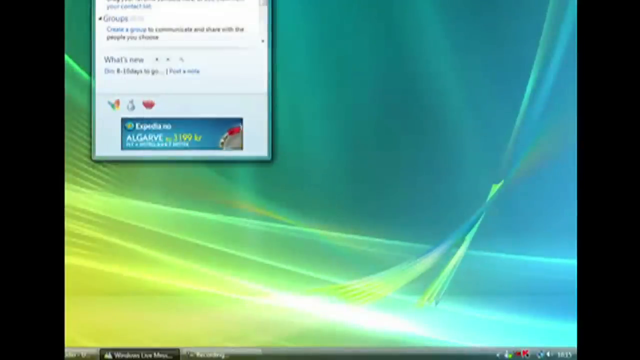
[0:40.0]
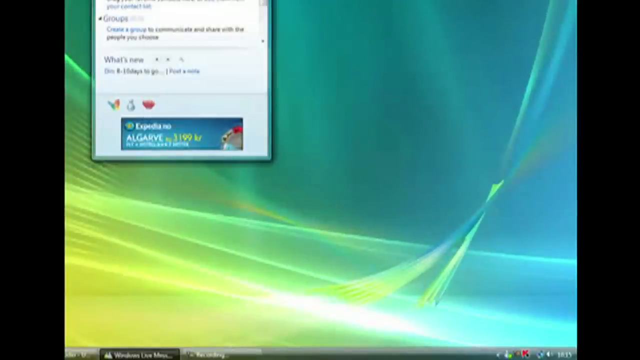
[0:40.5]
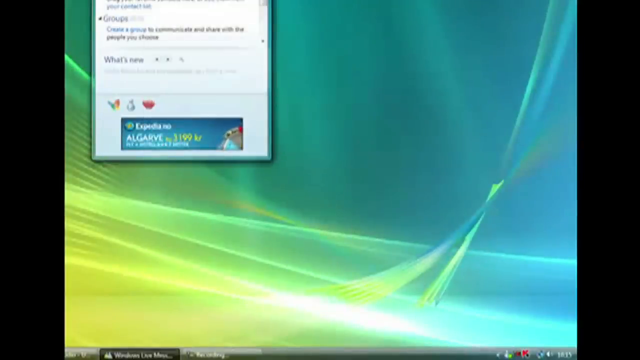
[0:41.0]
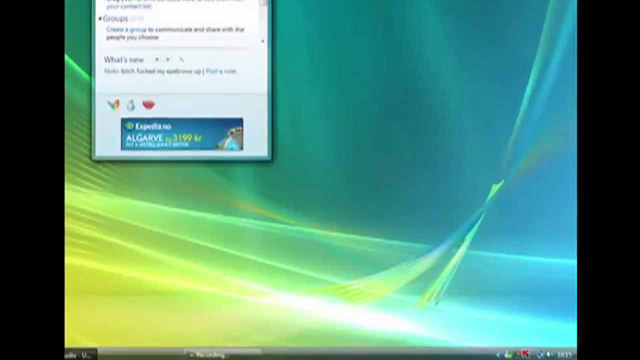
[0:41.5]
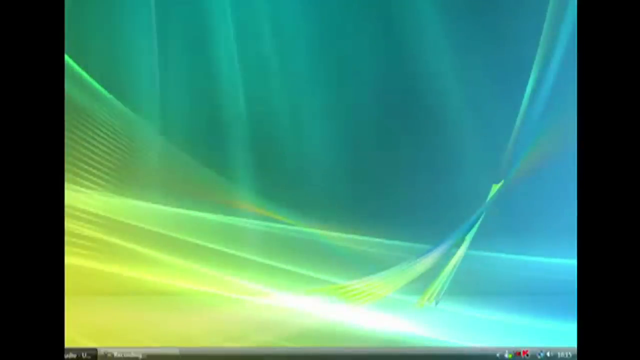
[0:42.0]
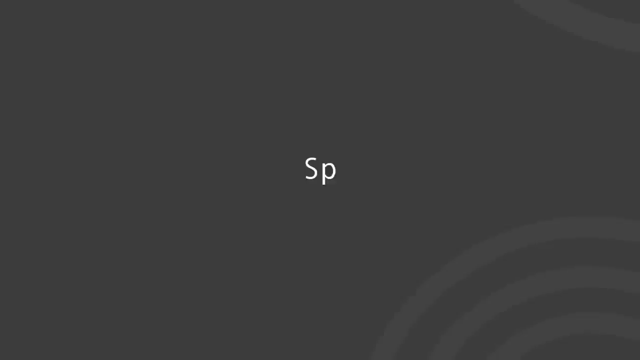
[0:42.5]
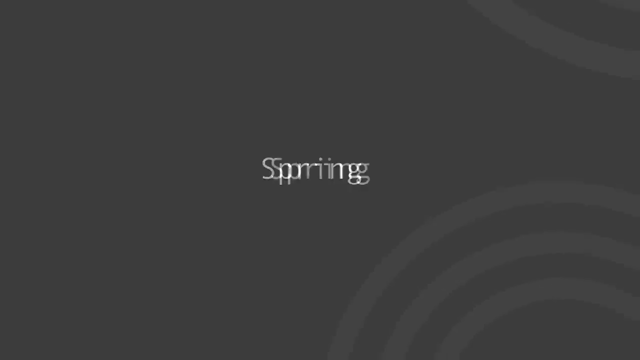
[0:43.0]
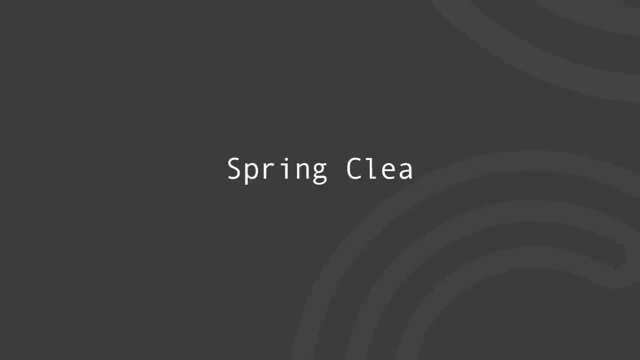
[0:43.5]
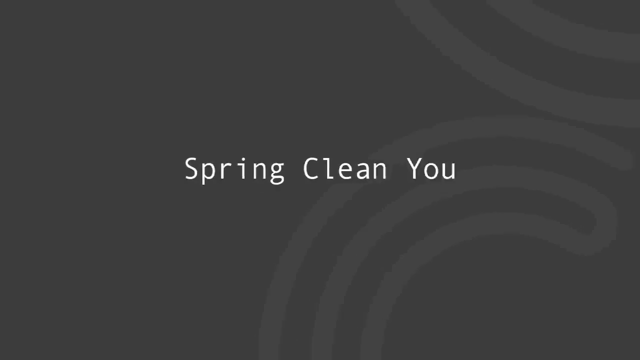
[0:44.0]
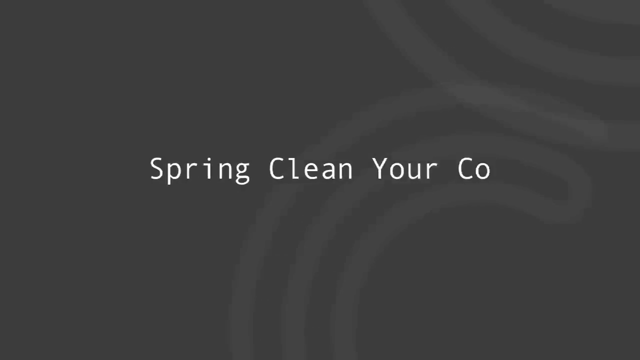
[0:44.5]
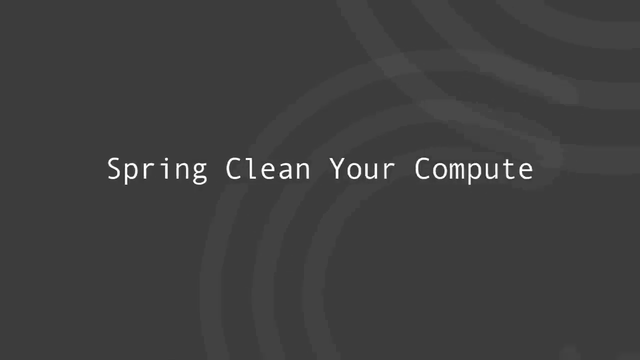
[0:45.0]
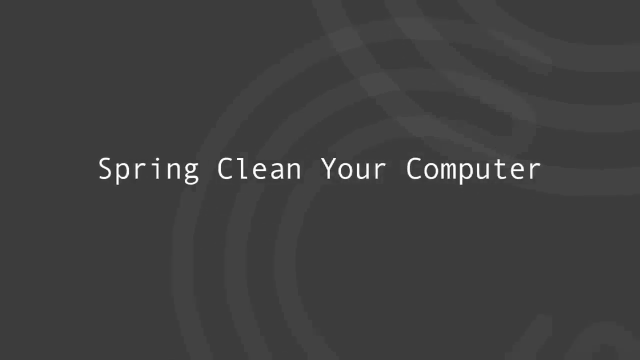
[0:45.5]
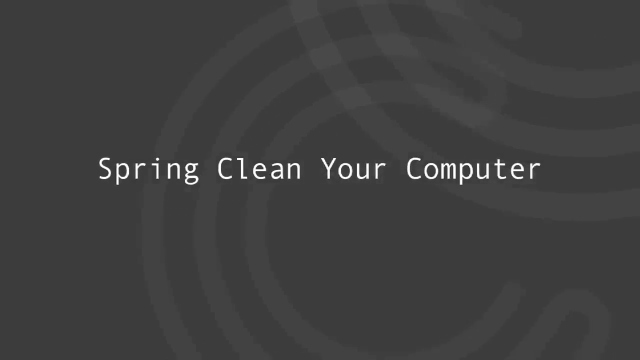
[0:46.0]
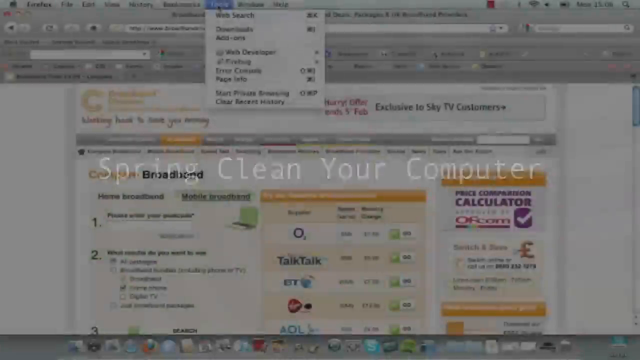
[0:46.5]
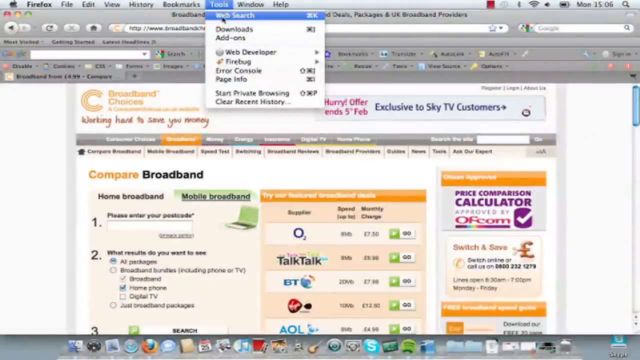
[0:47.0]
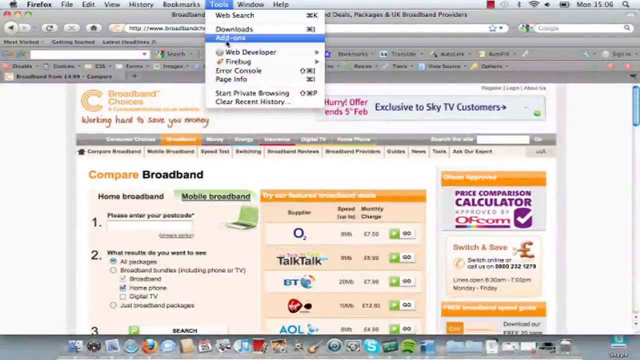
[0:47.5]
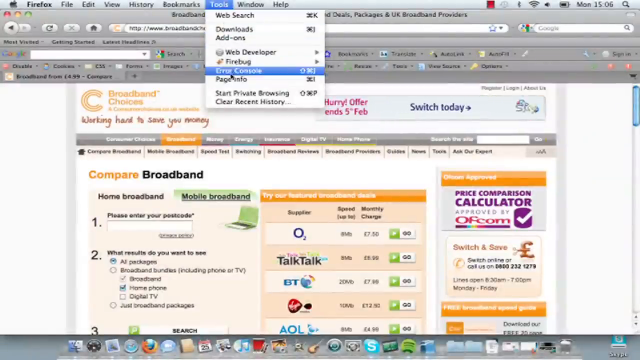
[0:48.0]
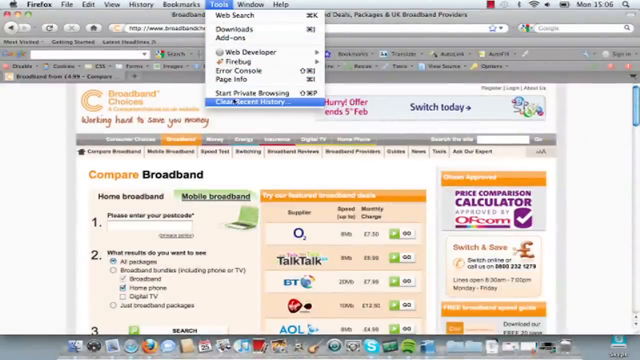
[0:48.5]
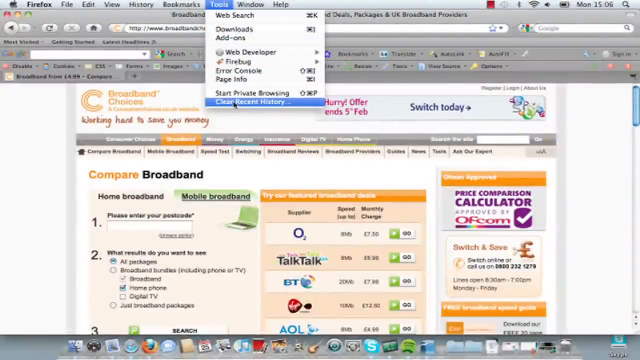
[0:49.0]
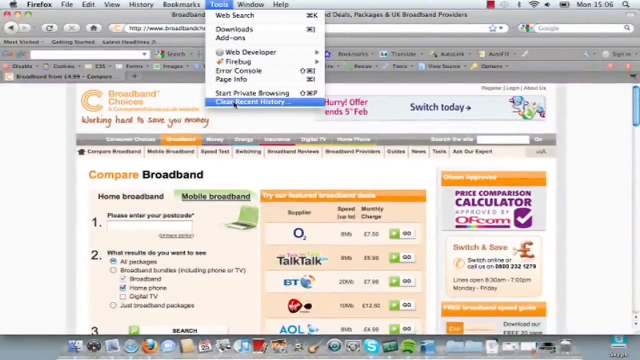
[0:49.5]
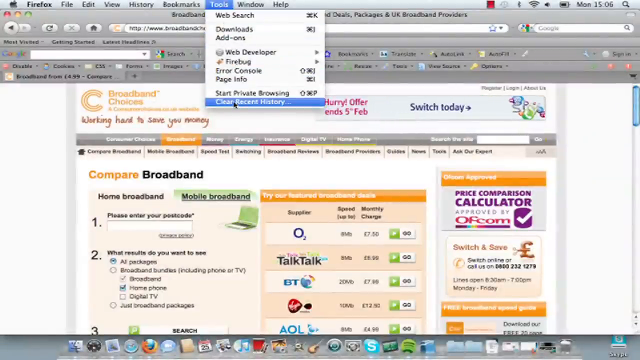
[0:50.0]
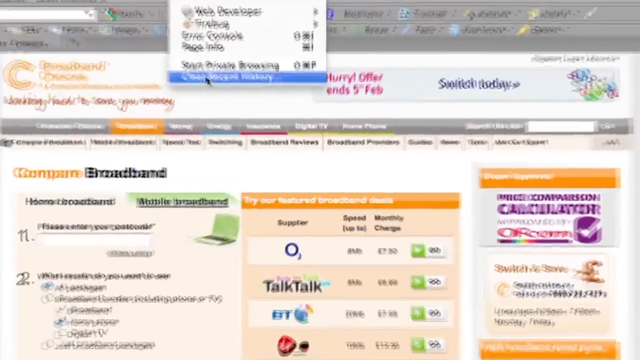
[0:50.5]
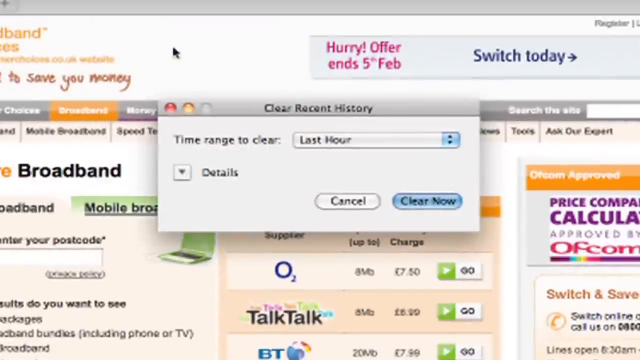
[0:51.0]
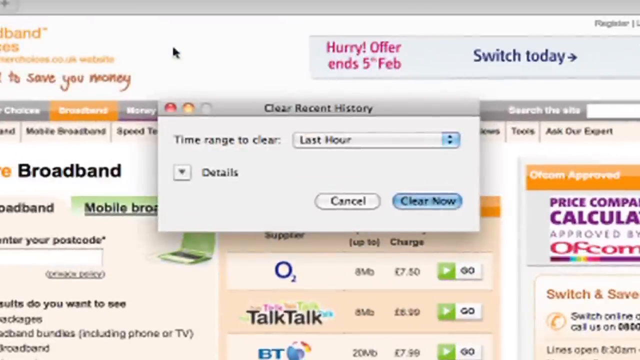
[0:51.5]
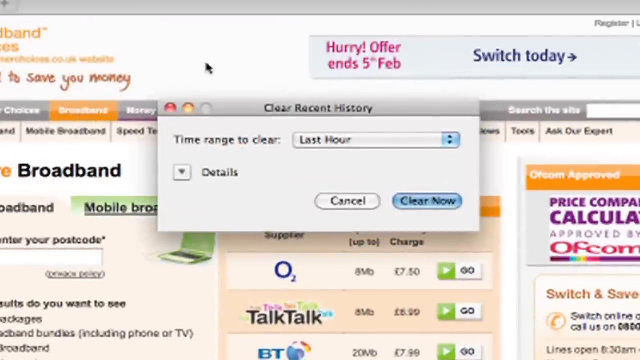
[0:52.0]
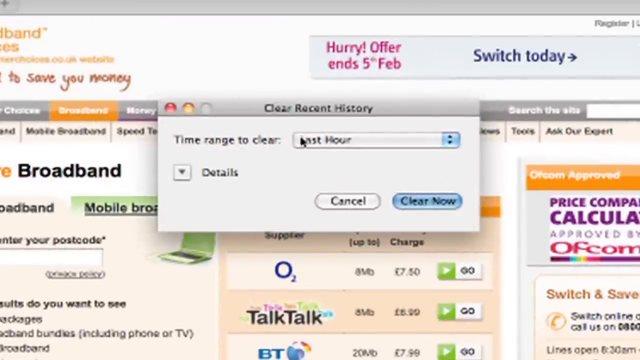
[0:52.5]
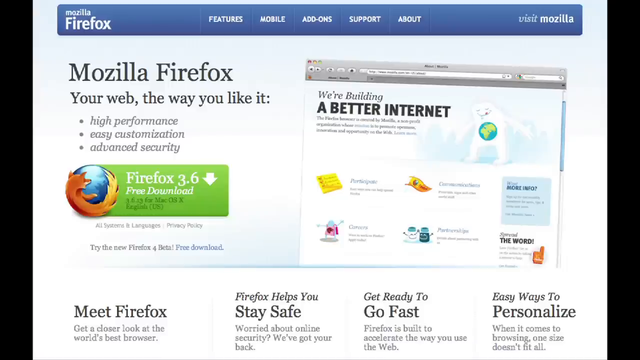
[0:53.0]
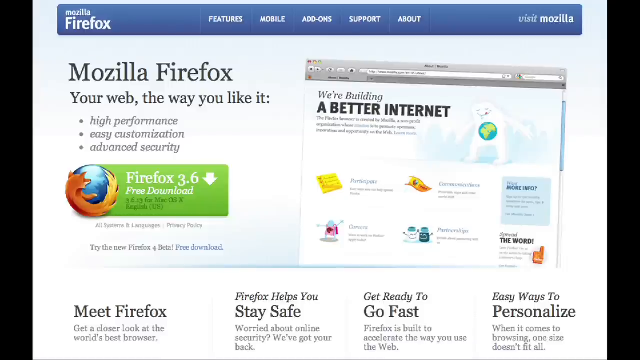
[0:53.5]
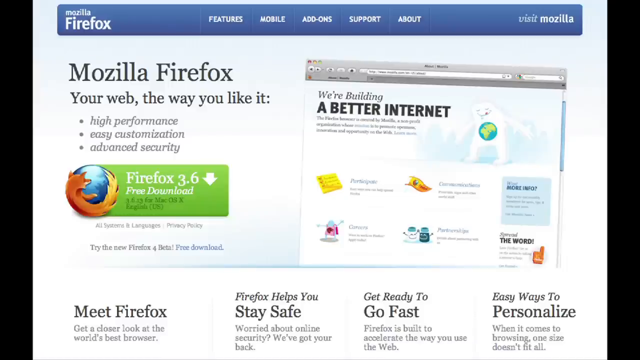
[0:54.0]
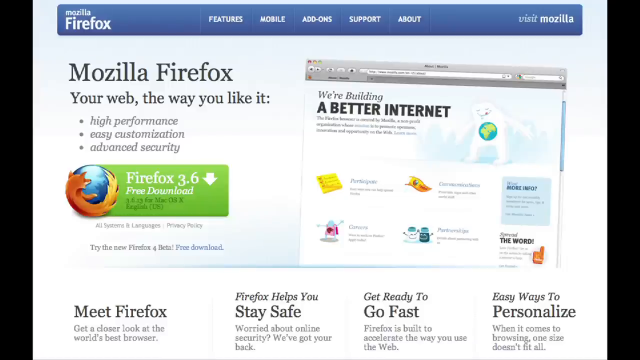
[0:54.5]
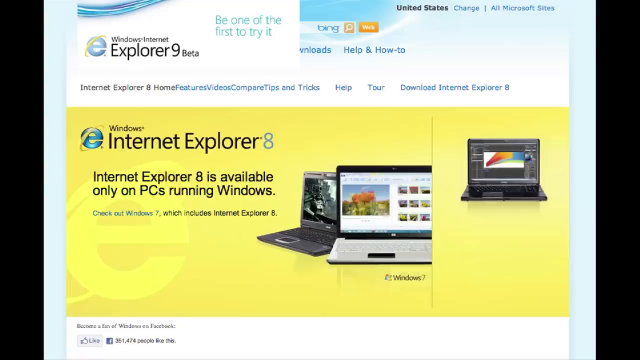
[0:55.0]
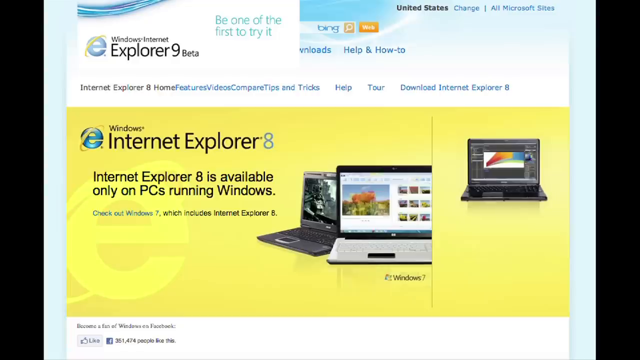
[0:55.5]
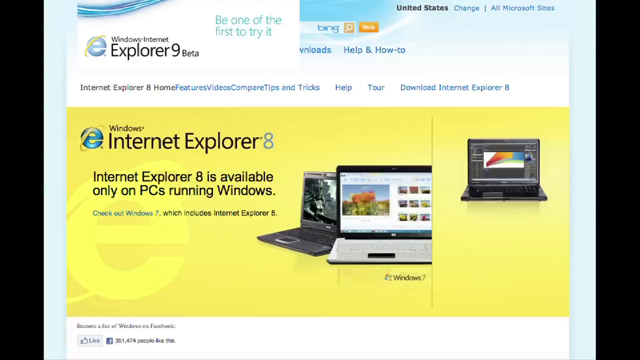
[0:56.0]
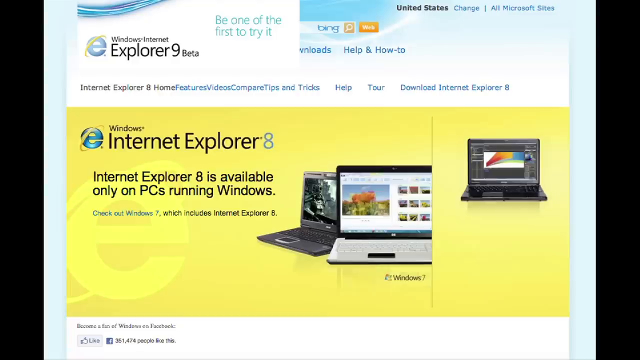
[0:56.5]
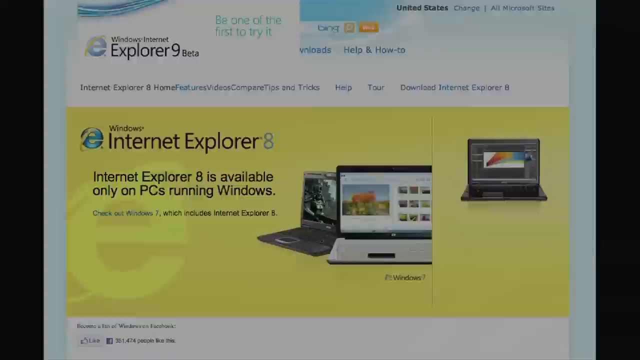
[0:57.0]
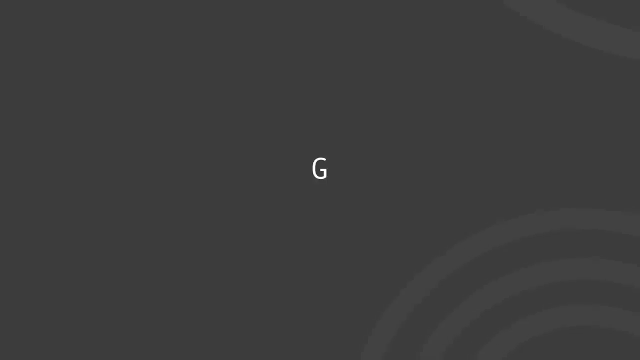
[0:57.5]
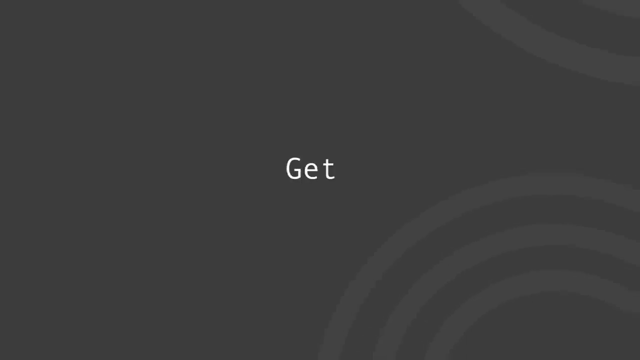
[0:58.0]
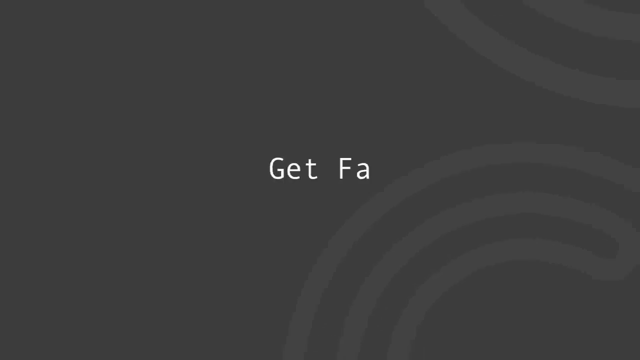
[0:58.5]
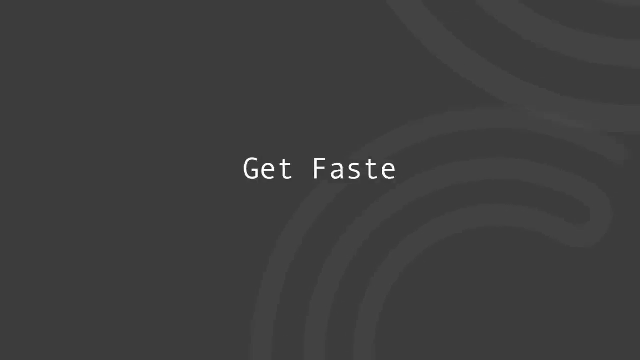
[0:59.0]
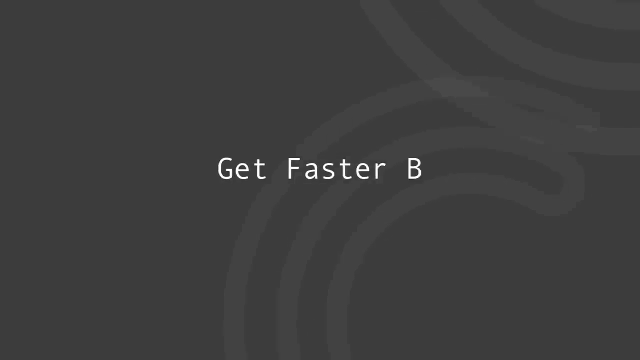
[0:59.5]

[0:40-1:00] A browser appears in which the person is trying to clear the recent history. The recent history shows a time frame that can be cleared, with an hour selected. The video then shows the browsers this can be done in: Mozilla Firefox, Internet Explorer 8, and Internet Explorer 9 above the 8. All of this happens on the television connected to the PC, where the person can be seen doing these things.